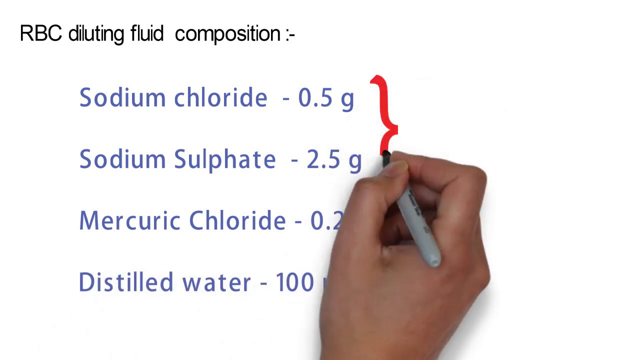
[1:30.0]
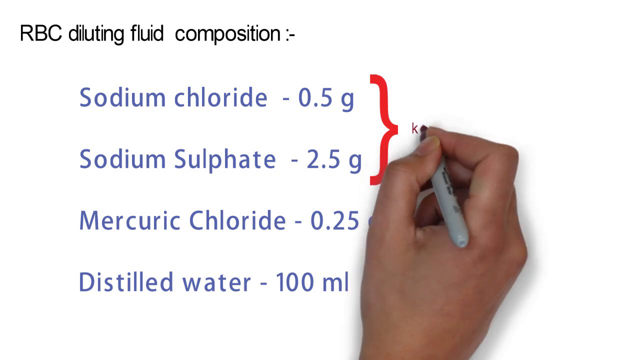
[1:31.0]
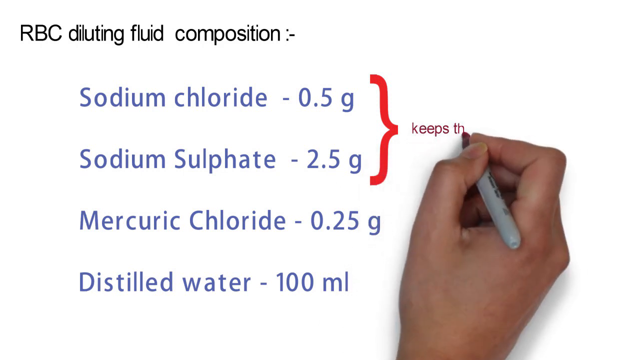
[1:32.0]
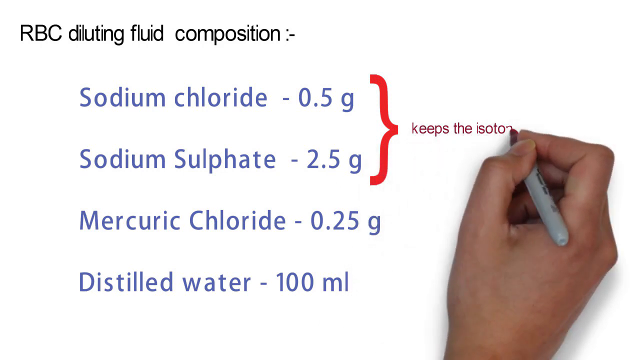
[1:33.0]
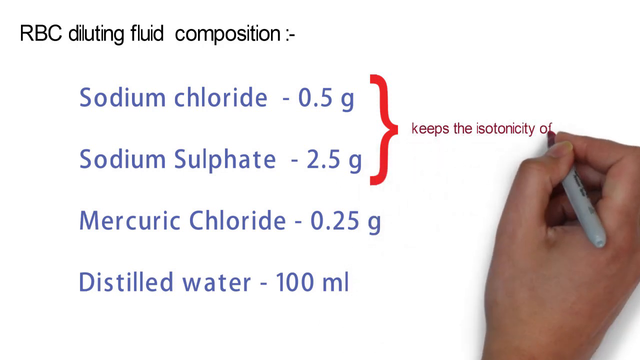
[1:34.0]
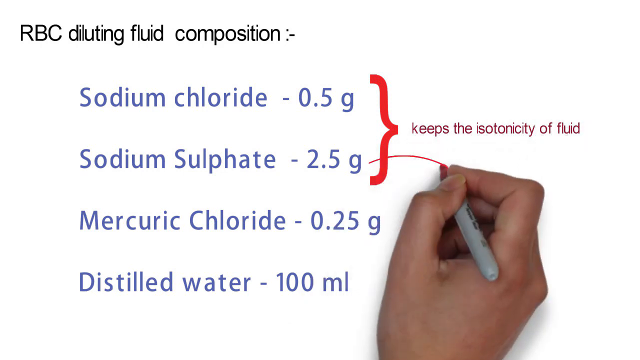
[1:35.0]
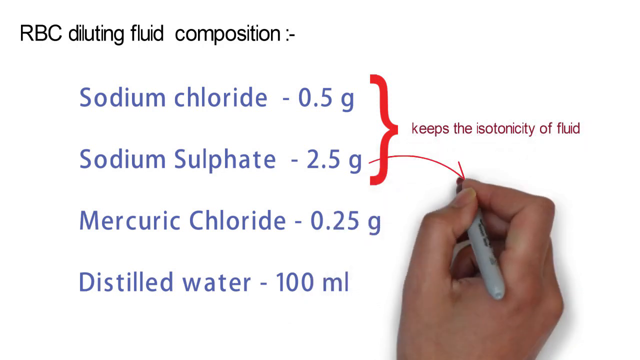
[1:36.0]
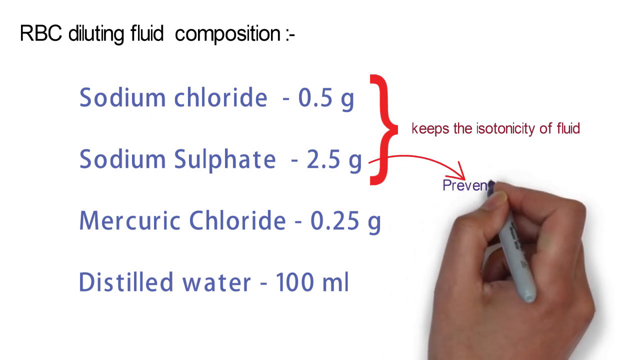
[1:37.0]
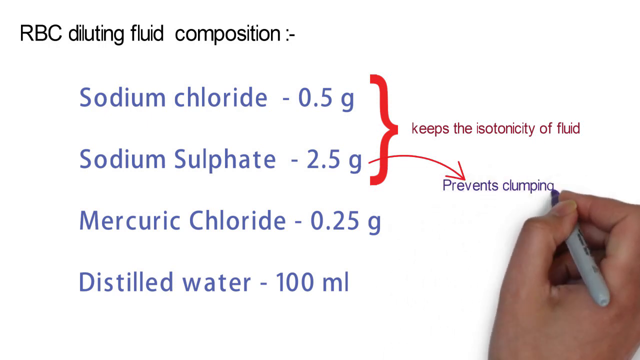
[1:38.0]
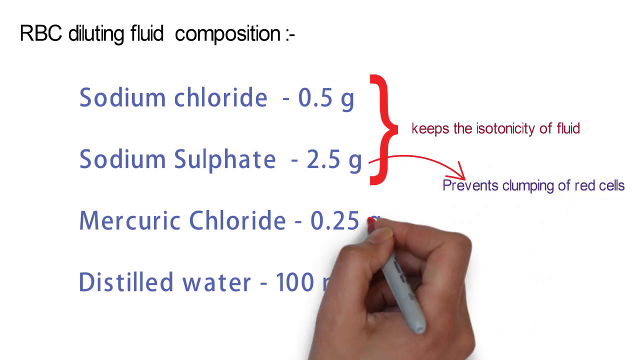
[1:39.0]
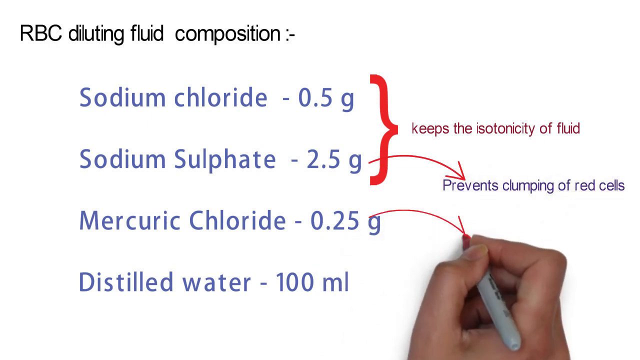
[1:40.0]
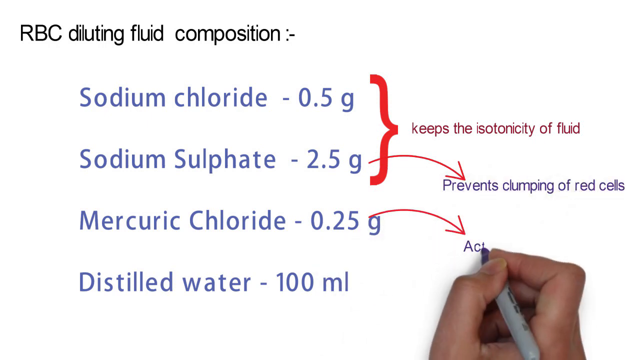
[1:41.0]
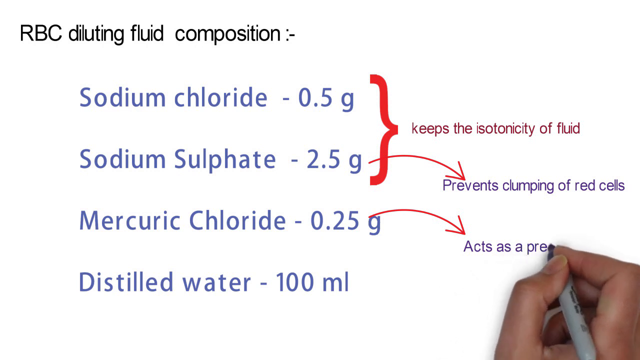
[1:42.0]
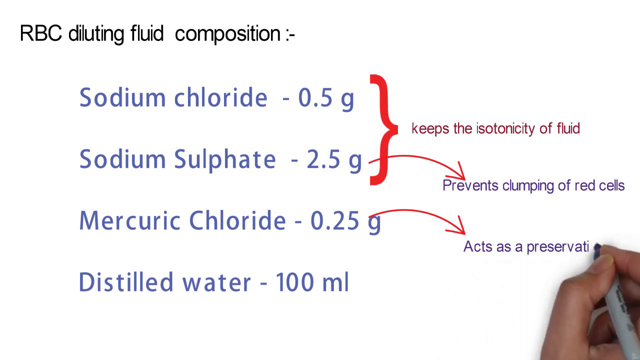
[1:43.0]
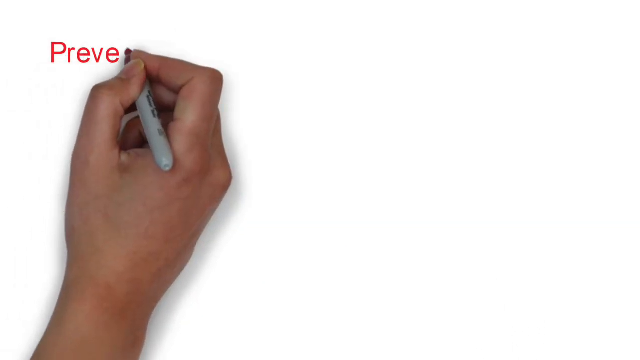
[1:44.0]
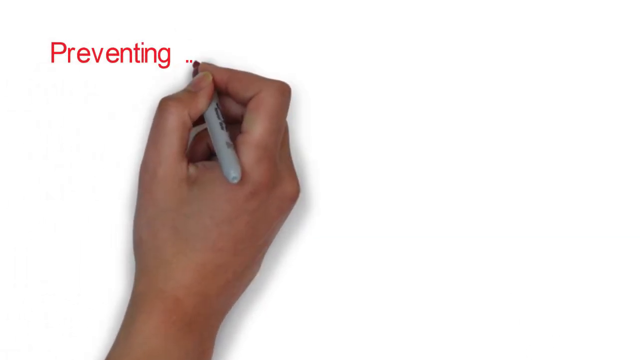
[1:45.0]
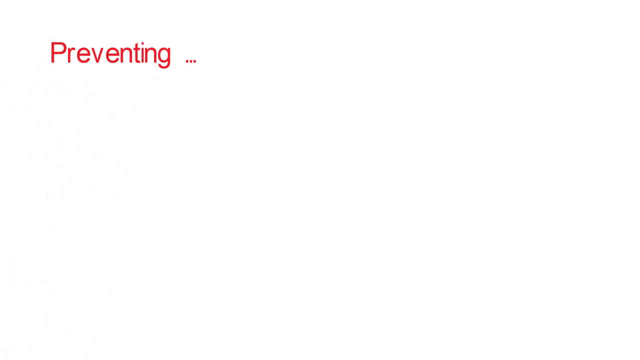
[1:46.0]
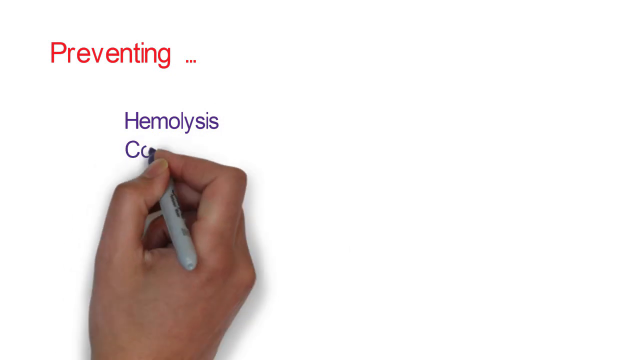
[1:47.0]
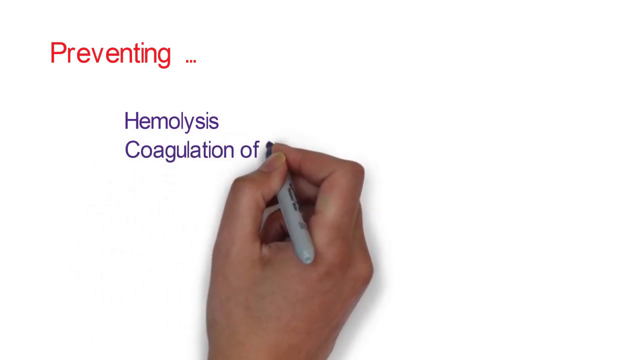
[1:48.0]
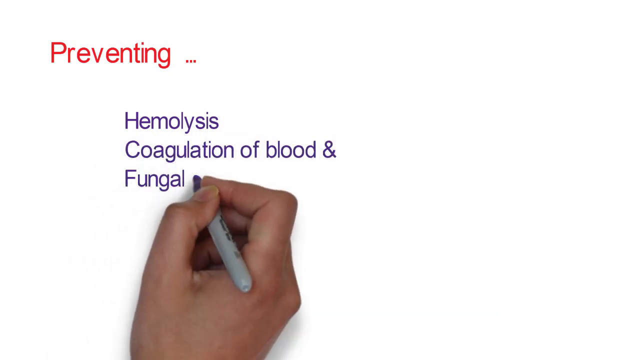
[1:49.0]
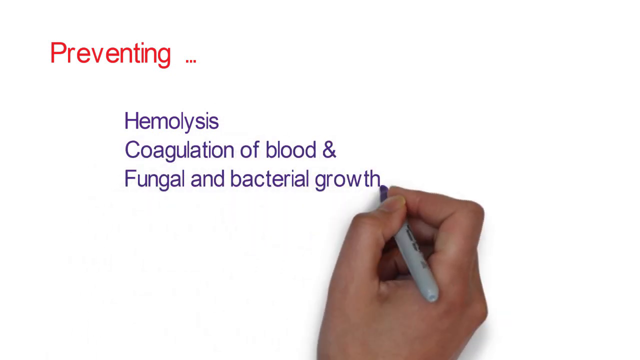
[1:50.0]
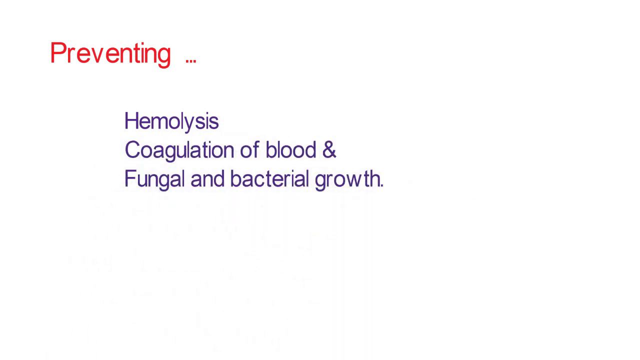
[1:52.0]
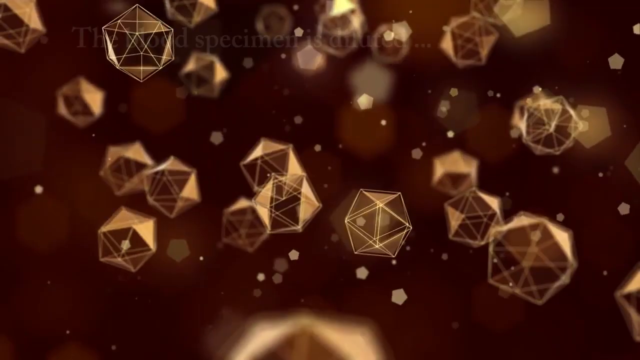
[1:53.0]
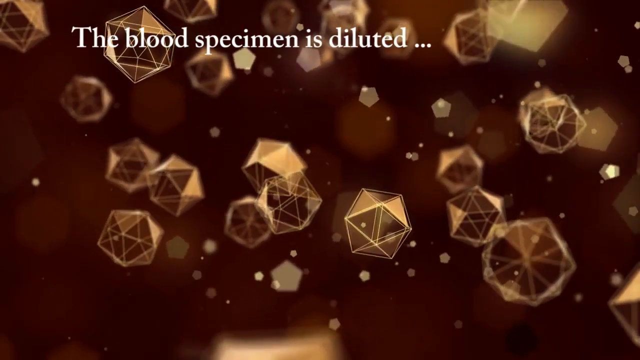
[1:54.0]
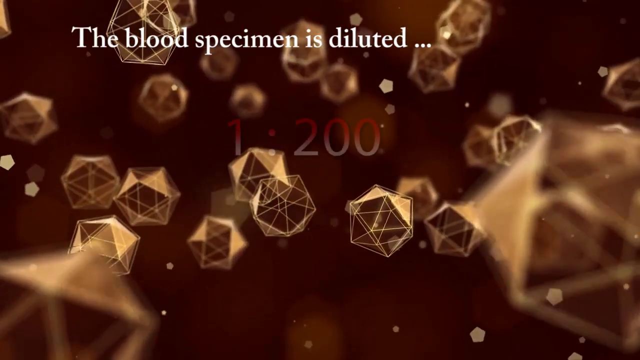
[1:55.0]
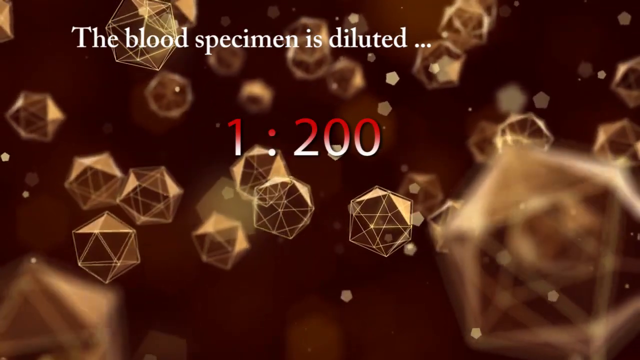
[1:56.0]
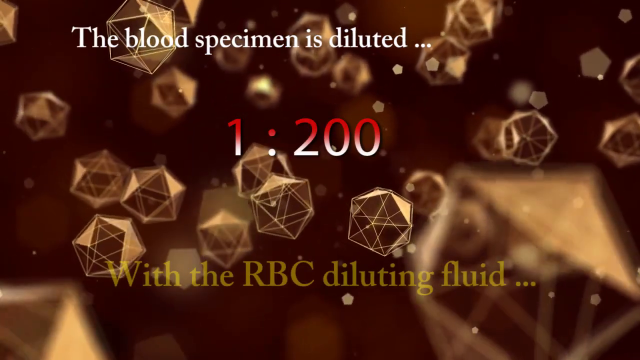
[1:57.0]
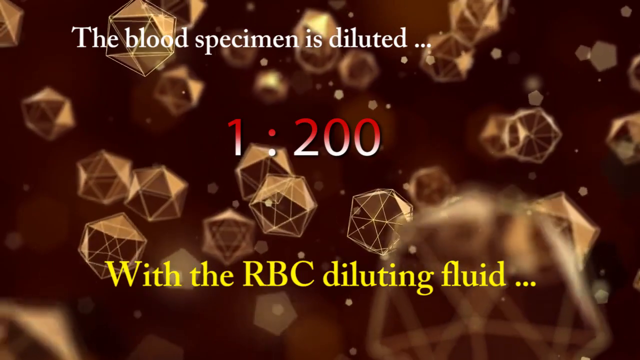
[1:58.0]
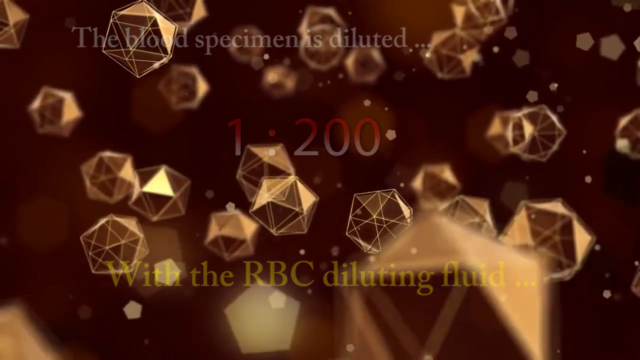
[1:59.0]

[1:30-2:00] The hand keeps writing, connecting the first two items, sodium chloride and sodium sulfate, in some way, with the text "keeps the isotonicity of the fluid". A small red arrow appears at the sodium sulfate number with the text "prevents clumping of red cells". A red arrow then comes from the mercuric chloride with the text "acts as preservation". The hand writes "preventing..." in red, followed by "hemolysis", "coagulation of blood" and "fungal and bacterial growth", written in purple or maybe a darkish blue. The background with the spinning objects returns, and white text appears stating that the blood specimen is diluted 1 to 200 with the RBC diluting fluid, with the numbers in red.